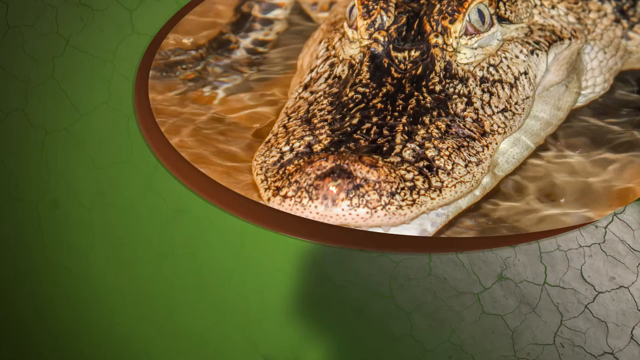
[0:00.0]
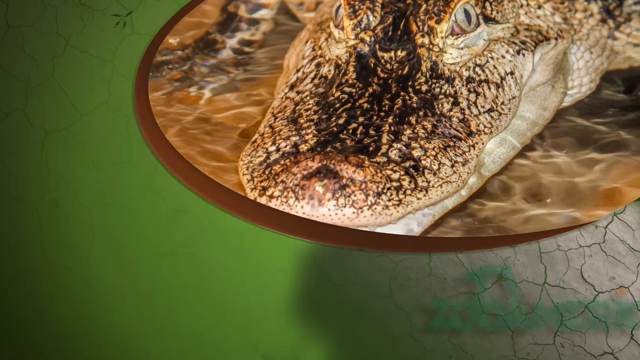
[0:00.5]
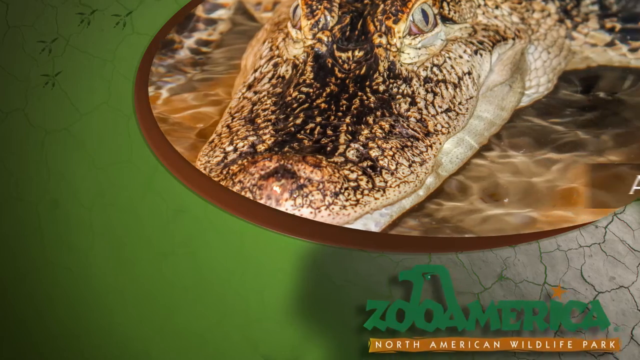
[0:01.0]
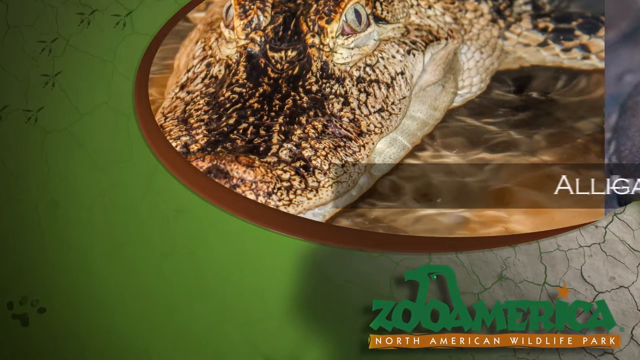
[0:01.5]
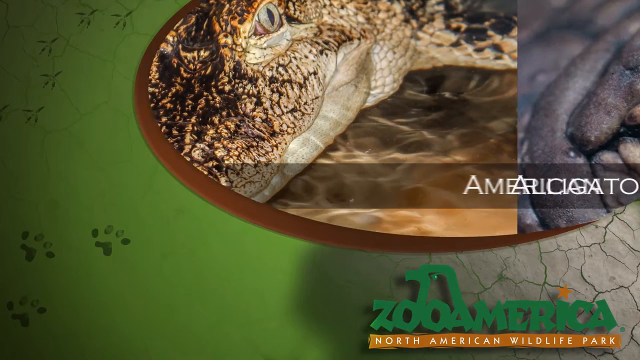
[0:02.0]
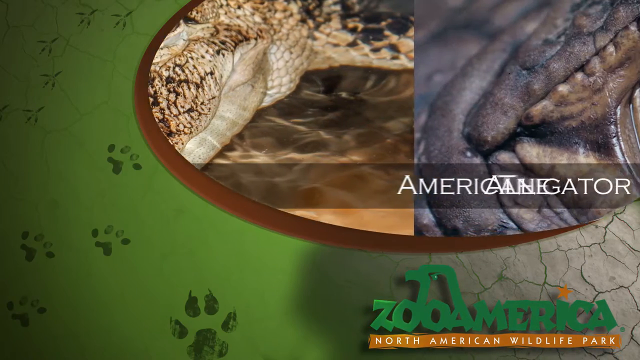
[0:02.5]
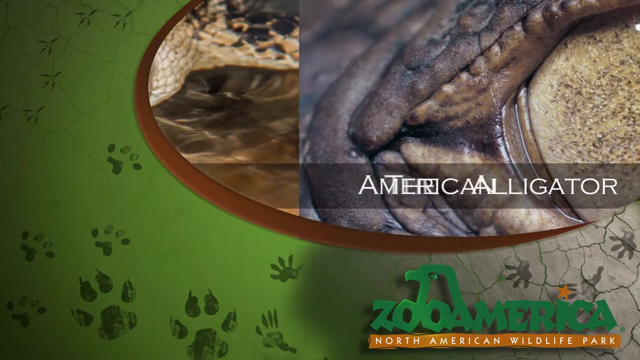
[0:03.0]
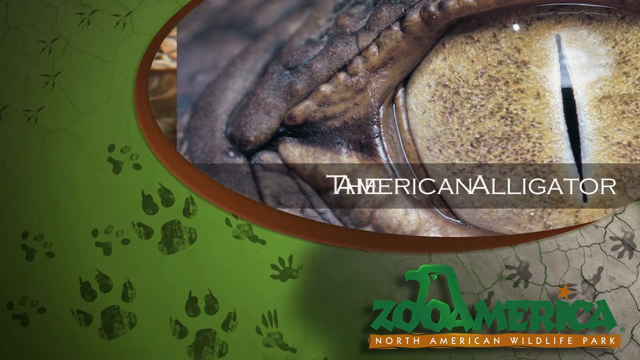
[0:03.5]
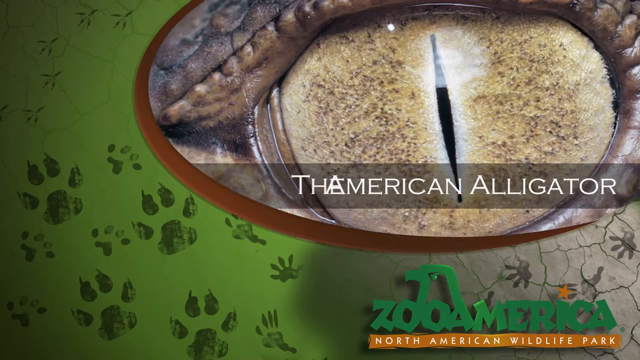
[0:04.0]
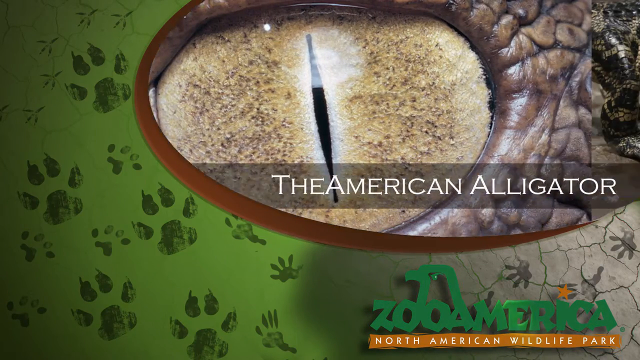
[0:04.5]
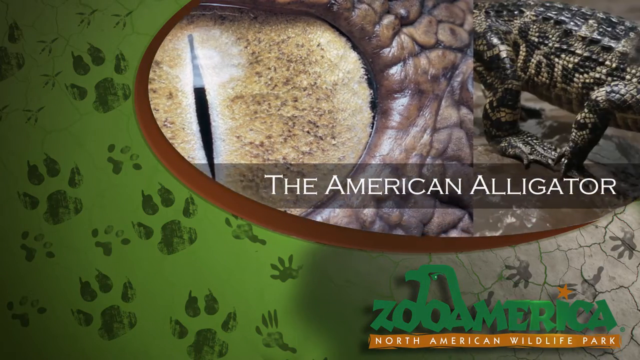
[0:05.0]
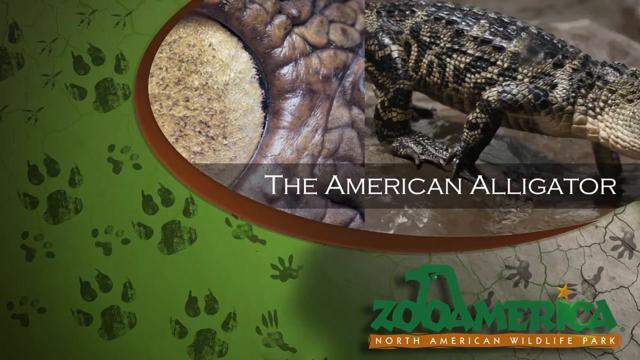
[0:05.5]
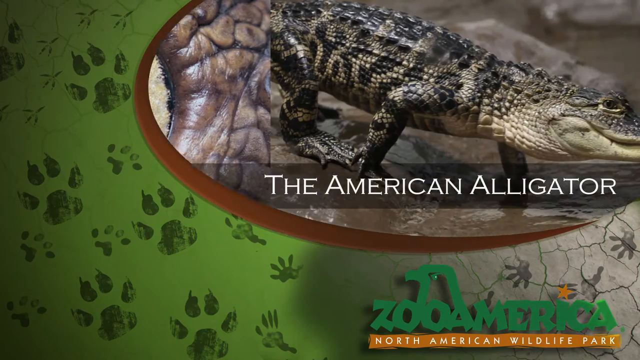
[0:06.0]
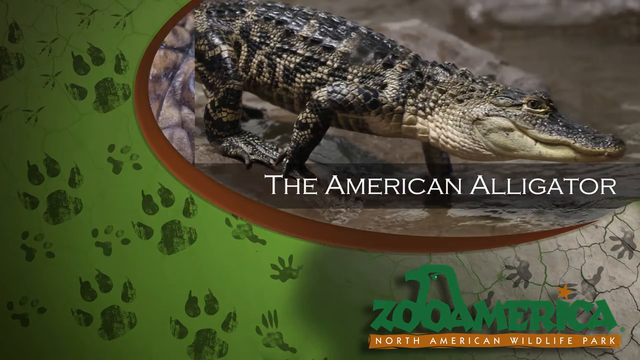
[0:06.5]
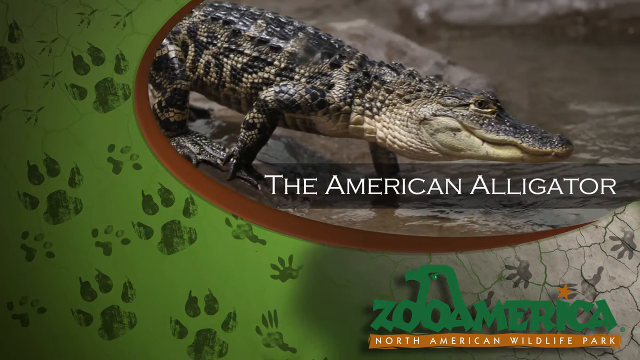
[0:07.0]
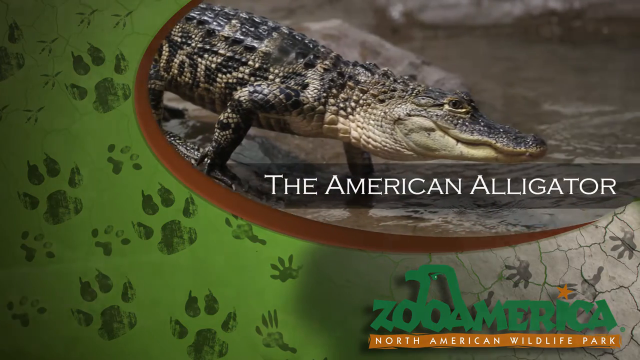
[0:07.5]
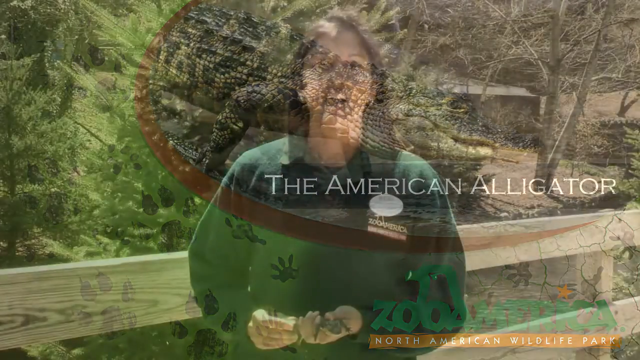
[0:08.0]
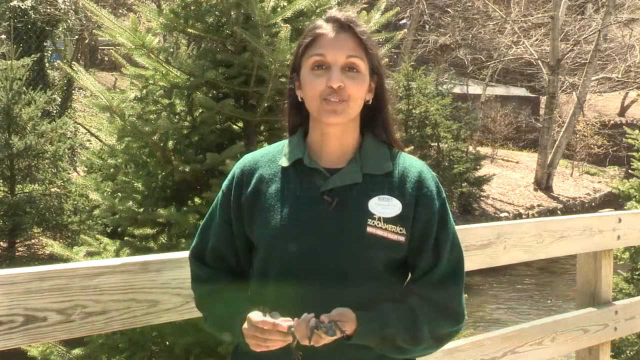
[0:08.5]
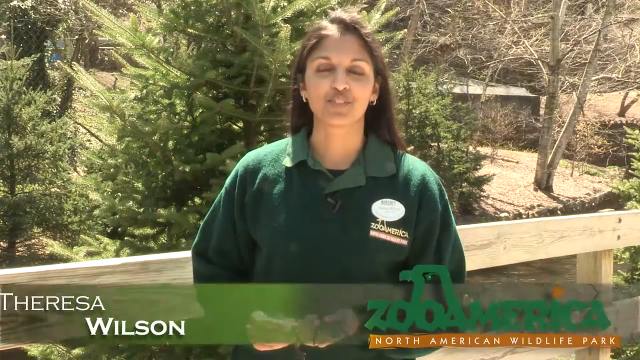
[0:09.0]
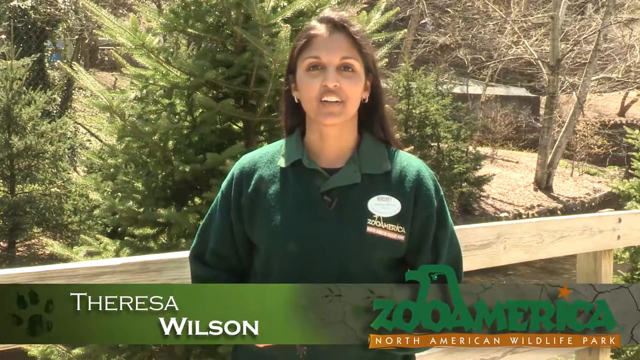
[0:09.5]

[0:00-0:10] The video features Zoo America, North American Wildlife Park, and focuses on the American alligator. A woman from the park, Theresa Wilson, appears wearing what seems to be a green shirt for Zoo America, North American Wildlife Park. This part ends with a Zoo America, North American Wildlife introduction screen.